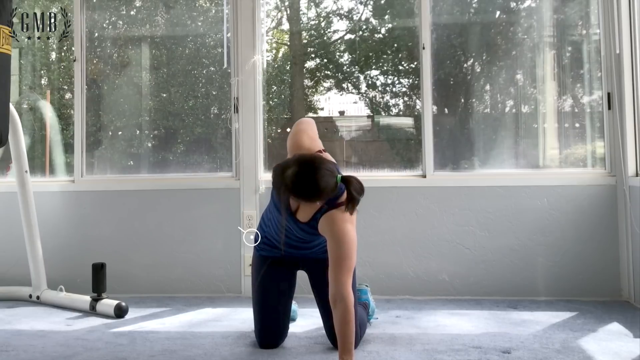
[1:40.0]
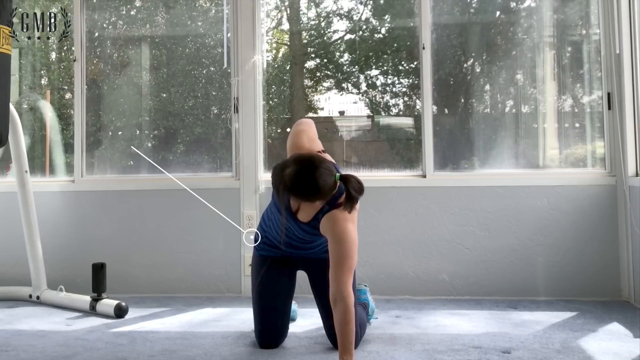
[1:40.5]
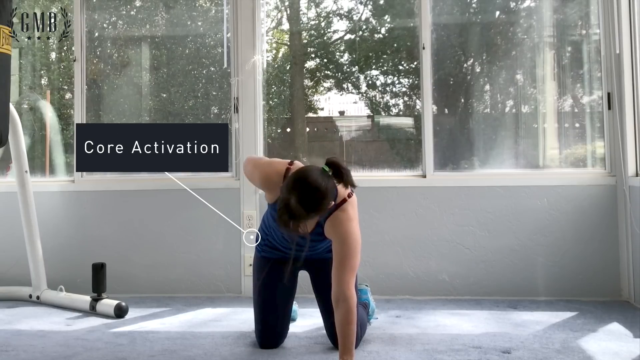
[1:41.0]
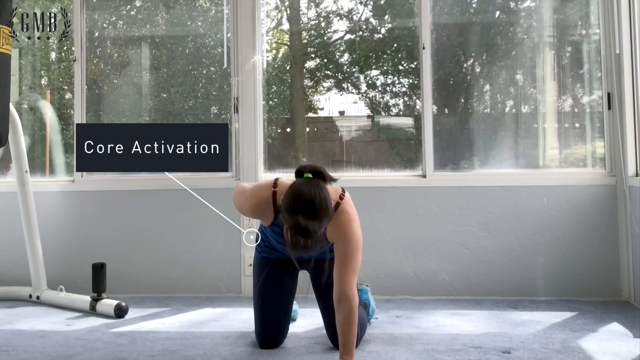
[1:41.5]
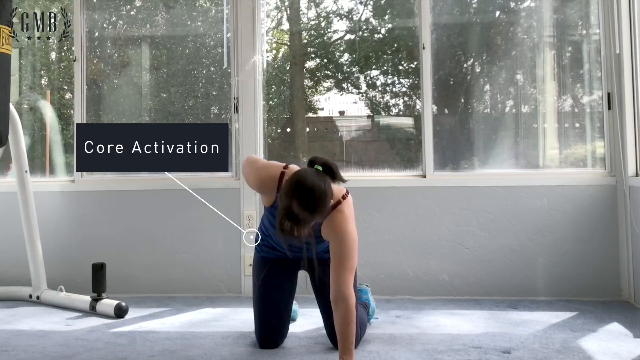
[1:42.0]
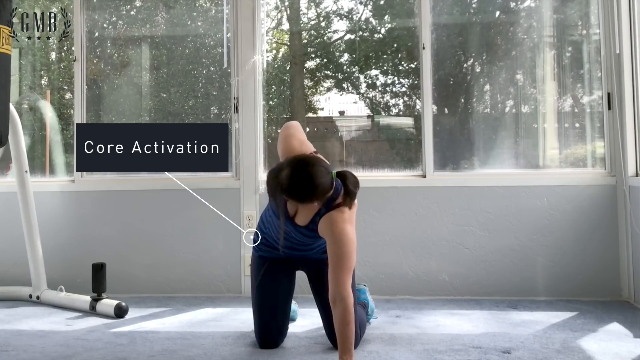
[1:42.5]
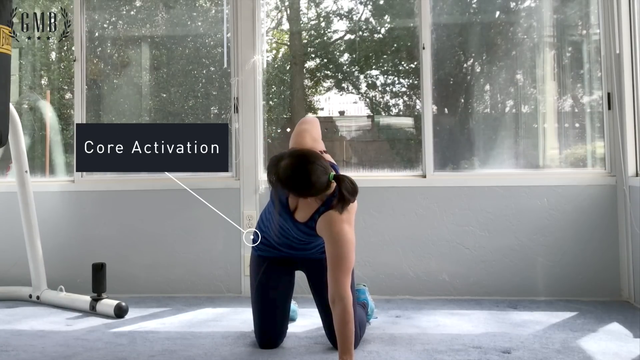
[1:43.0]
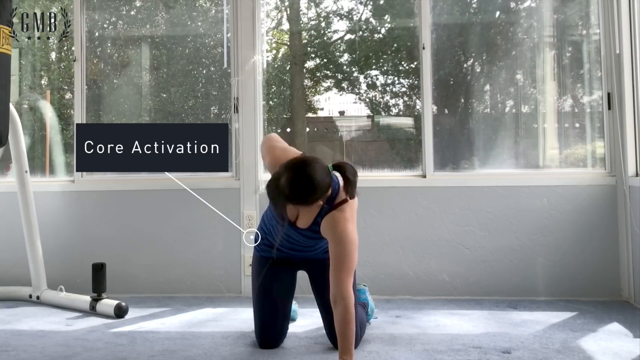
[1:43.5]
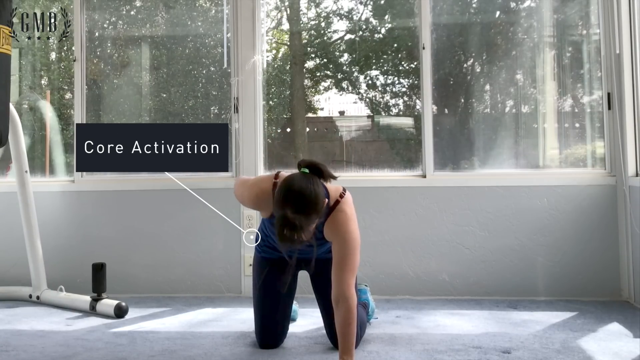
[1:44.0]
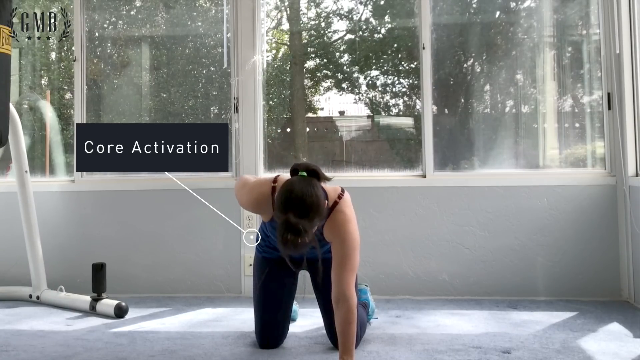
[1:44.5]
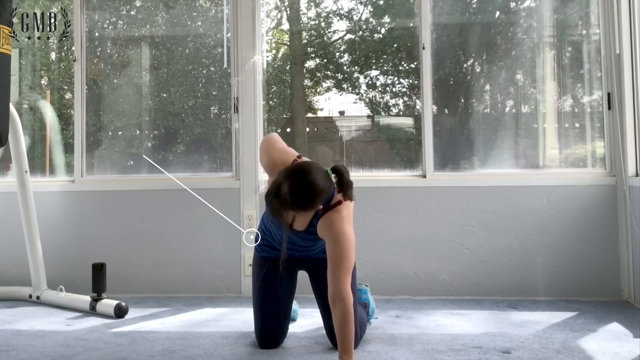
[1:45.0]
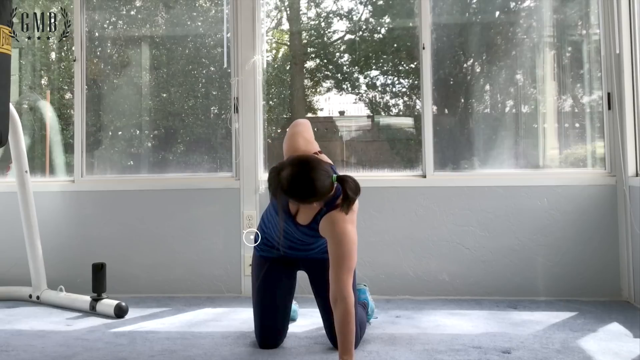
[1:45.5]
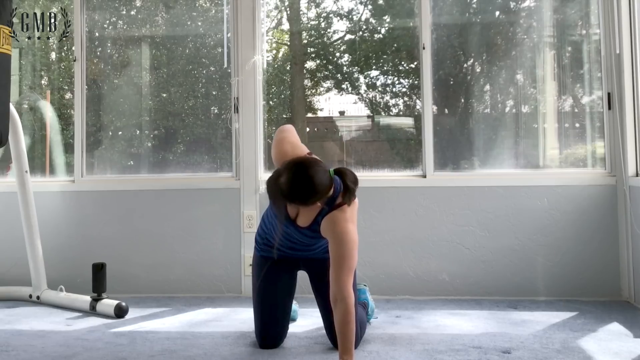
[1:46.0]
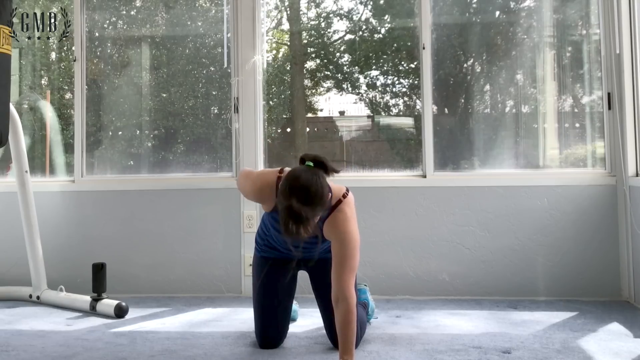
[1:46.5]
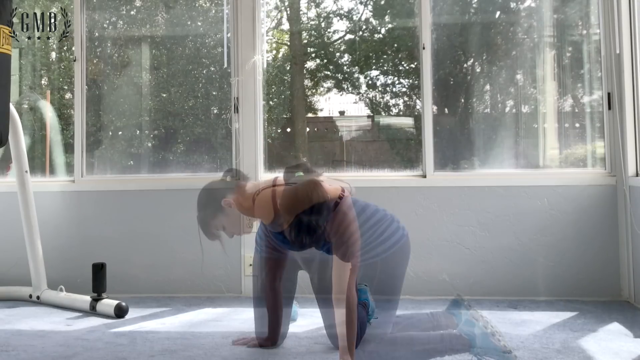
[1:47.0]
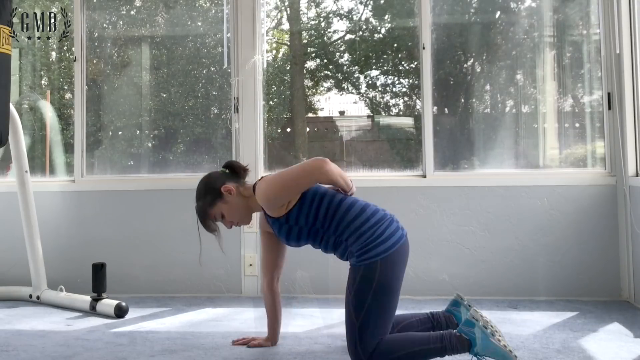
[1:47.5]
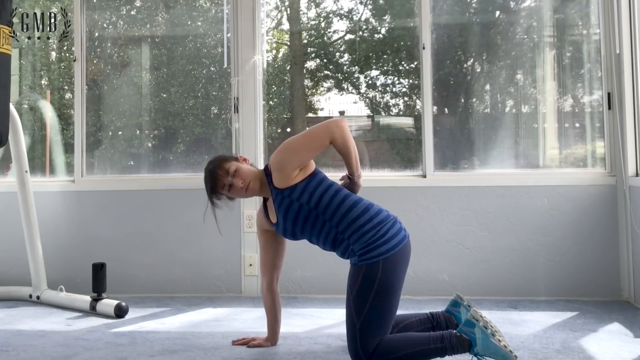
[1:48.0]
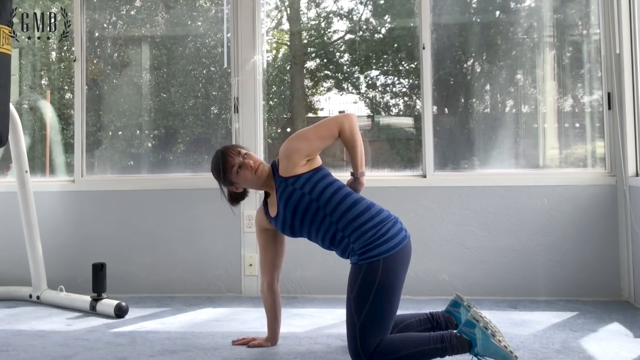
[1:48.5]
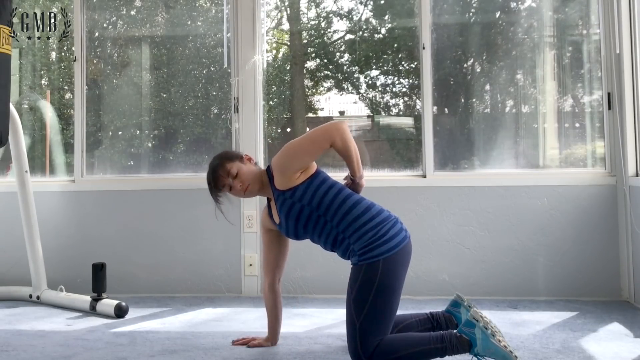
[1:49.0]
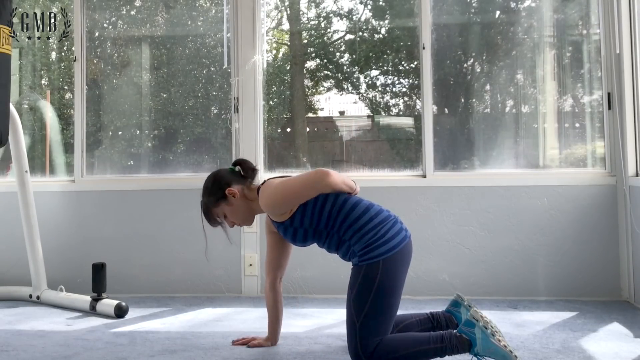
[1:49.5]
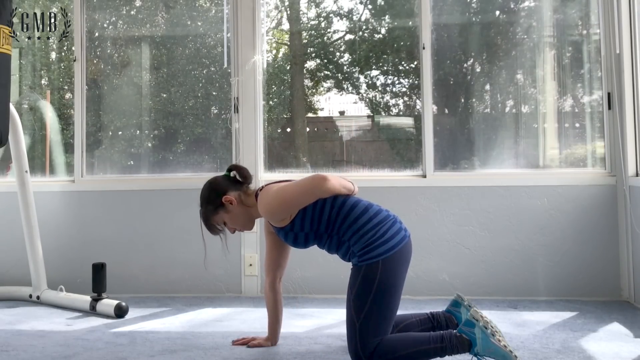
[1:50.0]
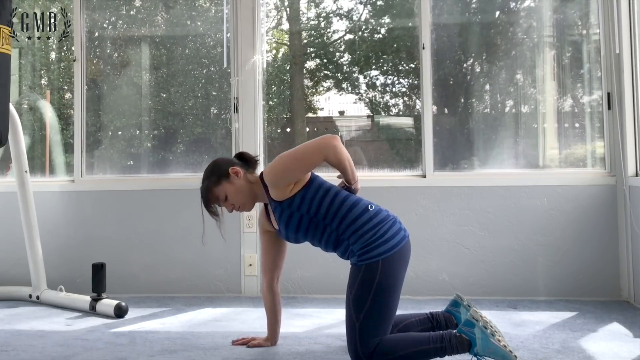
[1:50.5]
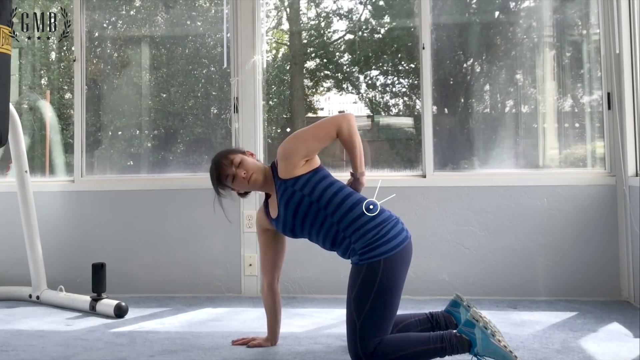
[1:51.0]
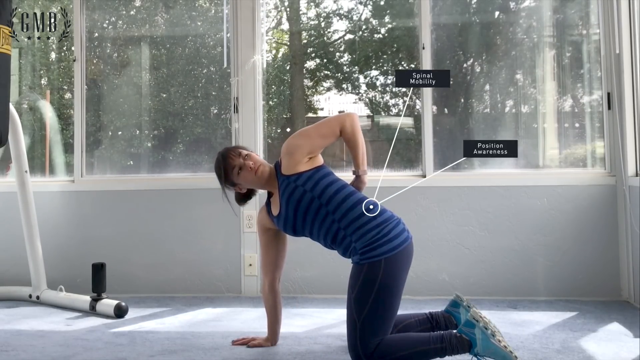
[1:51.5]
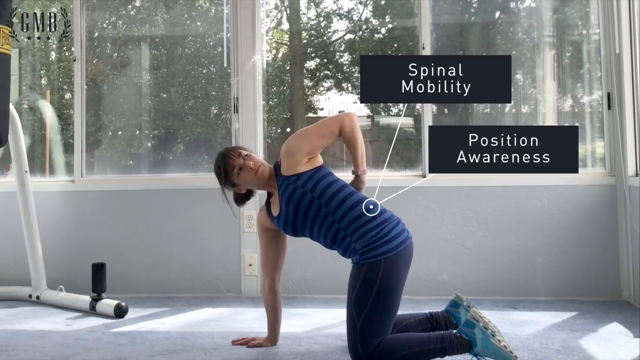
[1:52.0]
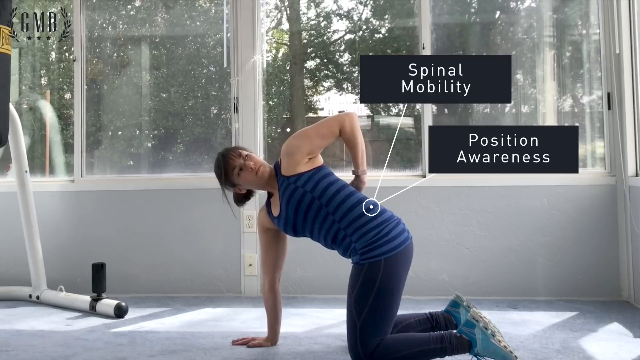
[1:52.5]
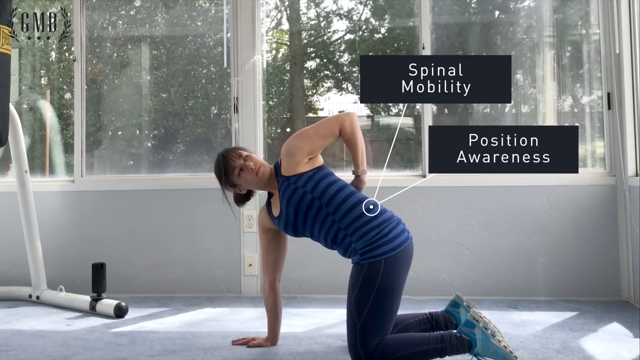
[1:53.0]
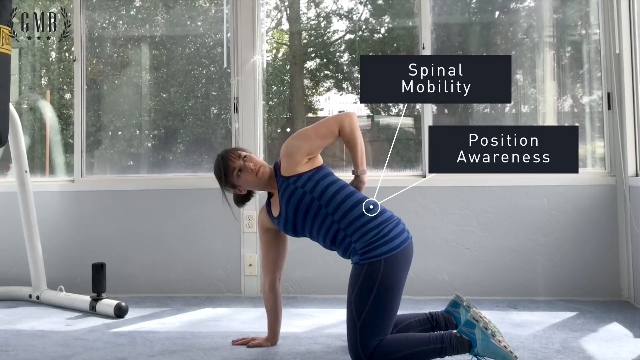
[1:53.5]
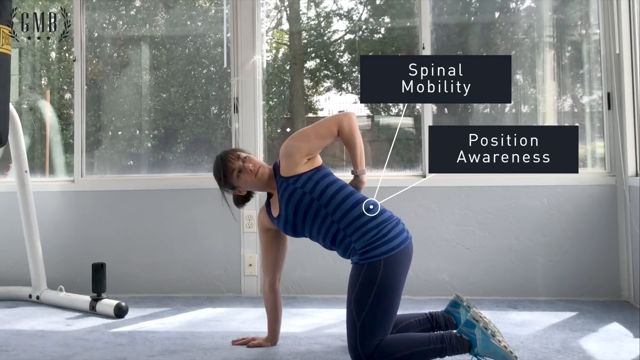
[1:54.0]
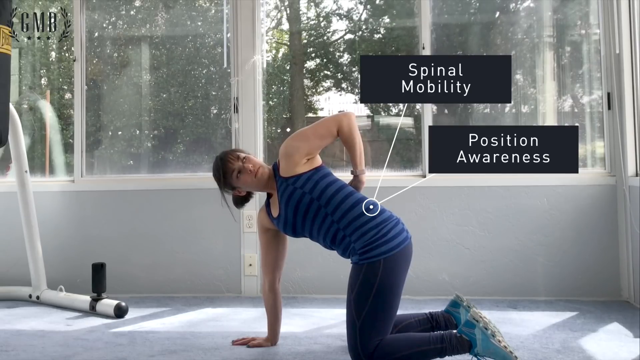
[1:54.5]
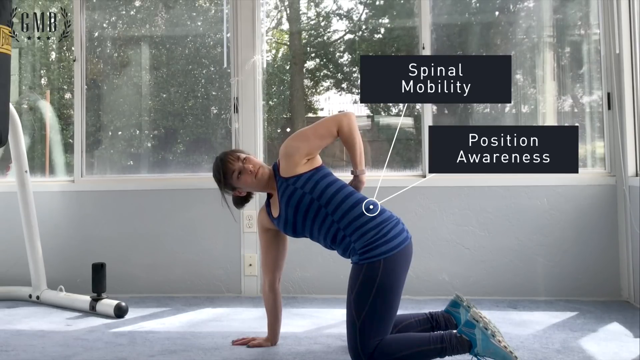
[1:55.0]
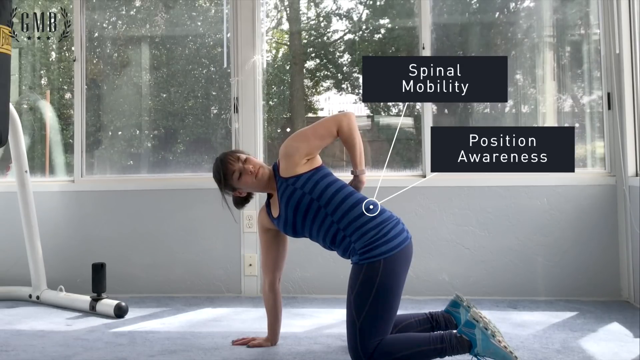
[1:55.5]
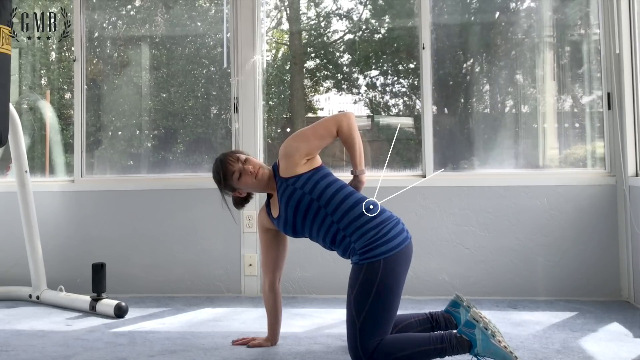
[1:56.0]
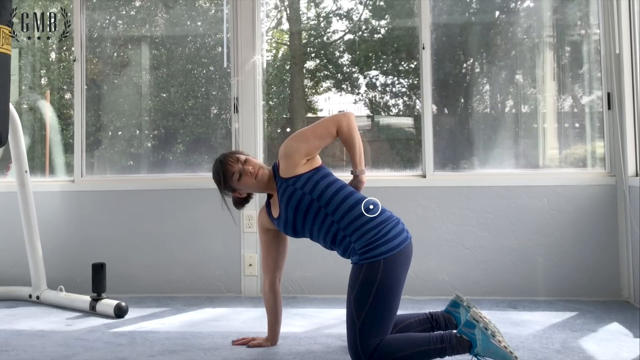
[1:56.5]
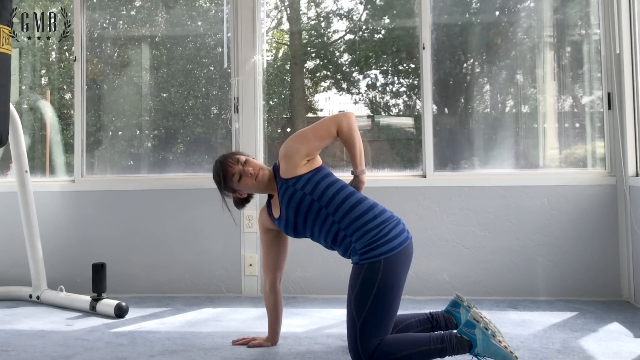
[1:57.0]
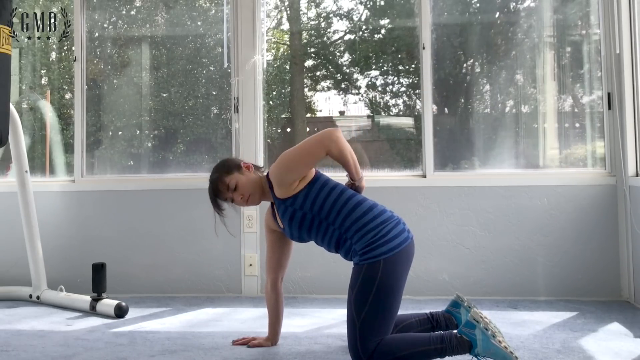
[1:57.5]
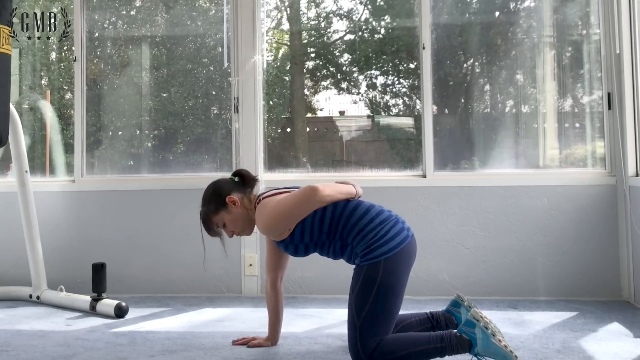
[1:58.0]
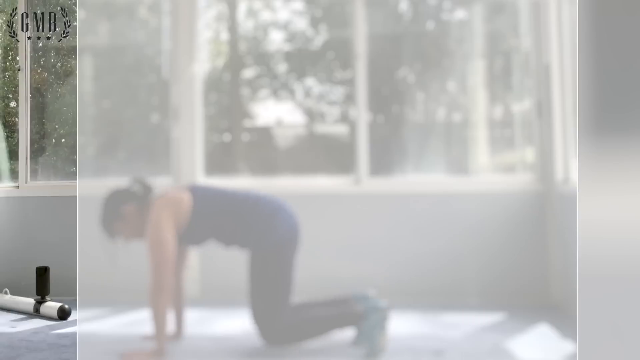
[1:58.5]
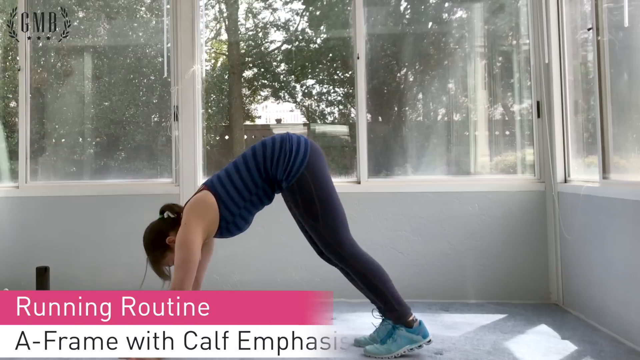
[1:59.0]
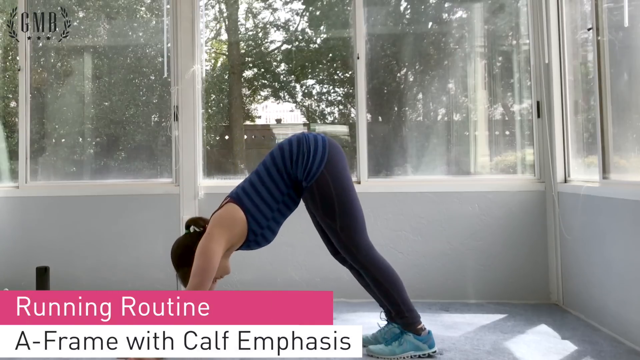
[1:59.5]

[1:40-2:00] A woman is exercising in a striped blue tank top, tight dark black or dark blue leggings and light blue shoes. Both of her knees are down on the ground with one hand on the ground; on the left side her elbow faces straight up, and the crown of her head faces directly toward the camera. A white dot next to her hip on the left side has a short line extending to a pop-up that says "core activation." As the pop-up appears, her left shoulder starts to come back down, then she picks it back up, rotating up and down a couple of times, and the white line disappears. Her ponytail moves from her back over to her right shoulder as she moves. The video switches to a side view with her head toward the left and her face looking downward. Her knees, shins and feet are flat on the ground, with one arm on the ground and the other behind her back. She picks up the elbow of the arm in the foreground so that it faces up and to the right, her face looking straight toward the camera, and moves the elbow up and down a few times in a circular motion. A white dot appears on her lower back with white lines leading to pop-ups at the top, one saying "spinal mobility" and another "position awareness." She blinks a couple of times as she holds her elbow up, then closes her eyes and brings the elbow back down. The video switches to another screen: both of her feet are on the ground, her bottom is up in the air and her hands are down on the ground in front of her, facing toward the left. A pink banner with white lettering comes up at the bottom saying "Running Routine." Her knee is slightly bent inward as the shot ends.